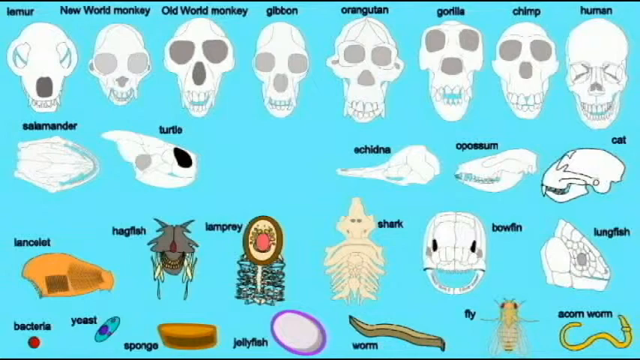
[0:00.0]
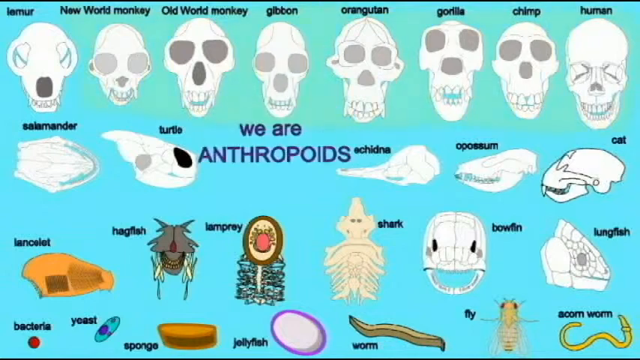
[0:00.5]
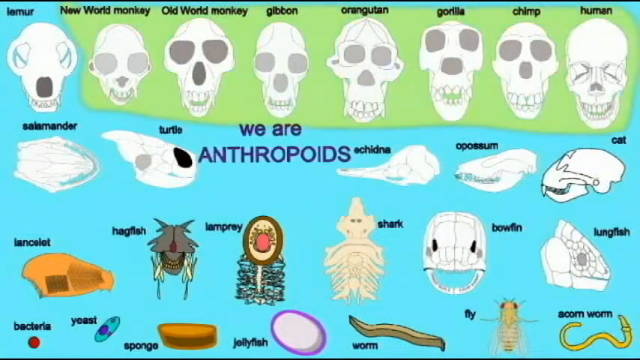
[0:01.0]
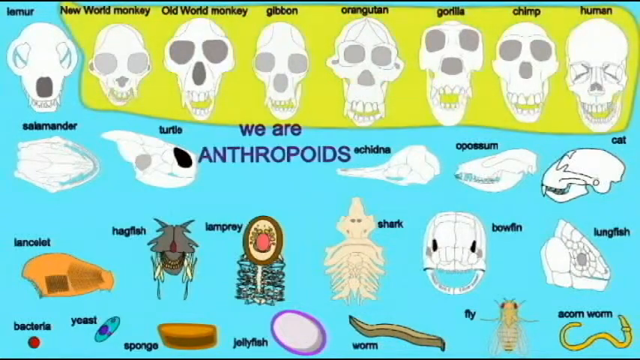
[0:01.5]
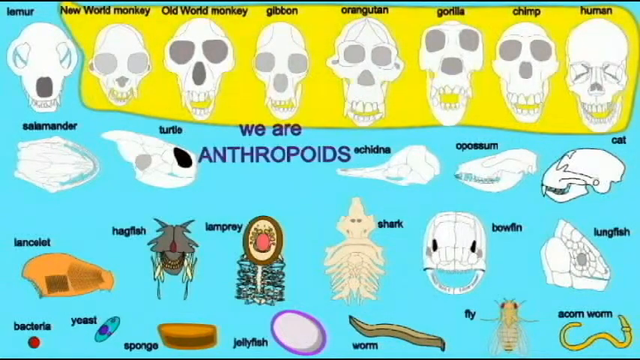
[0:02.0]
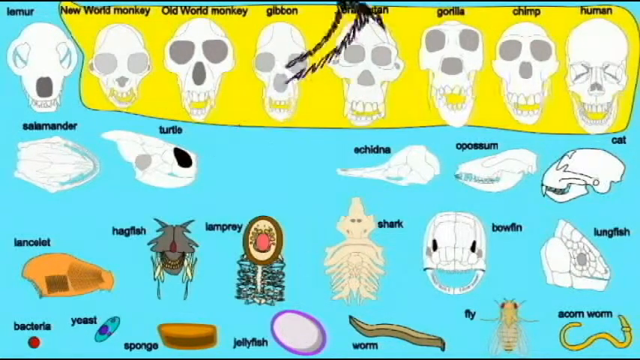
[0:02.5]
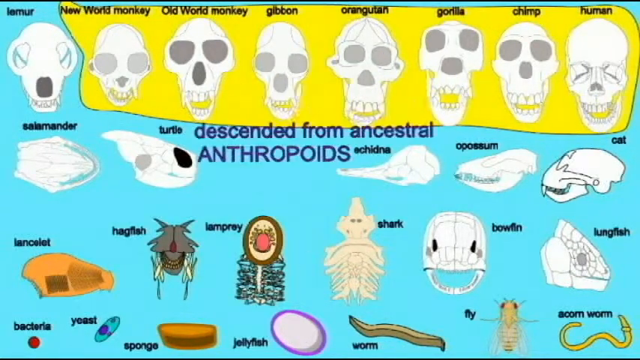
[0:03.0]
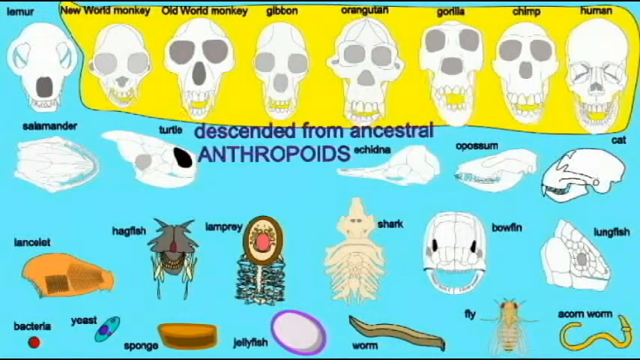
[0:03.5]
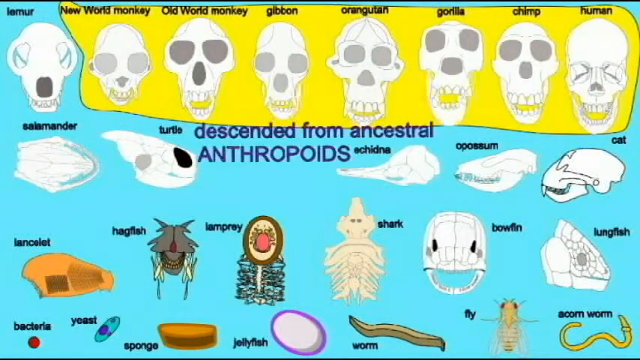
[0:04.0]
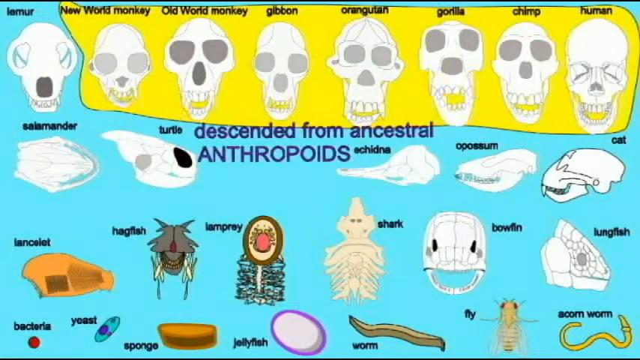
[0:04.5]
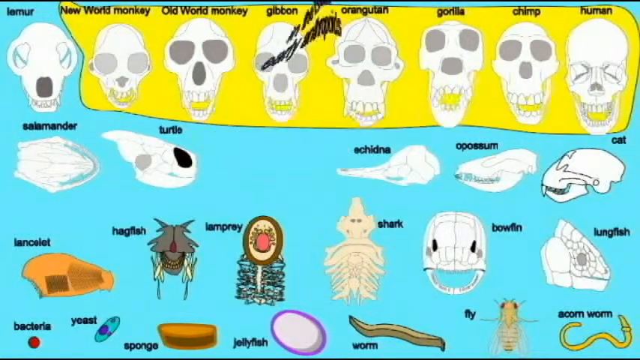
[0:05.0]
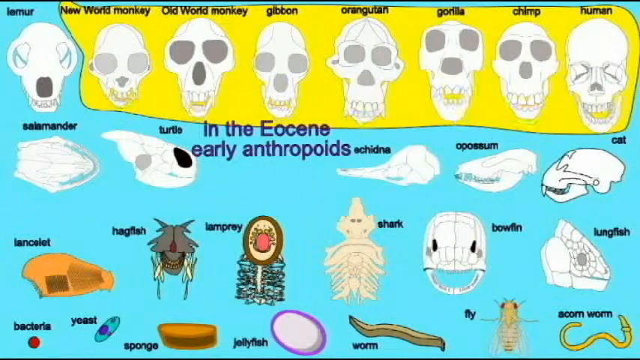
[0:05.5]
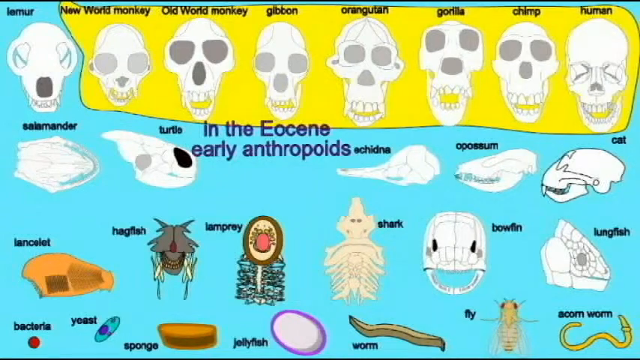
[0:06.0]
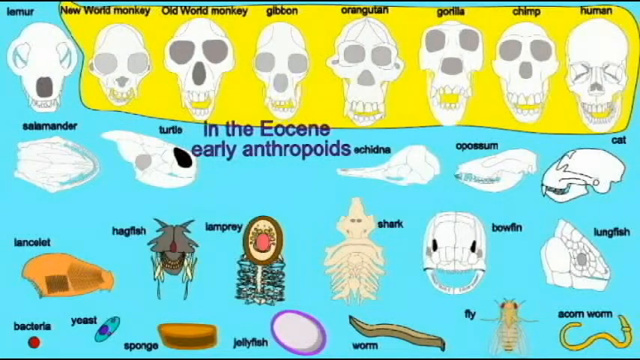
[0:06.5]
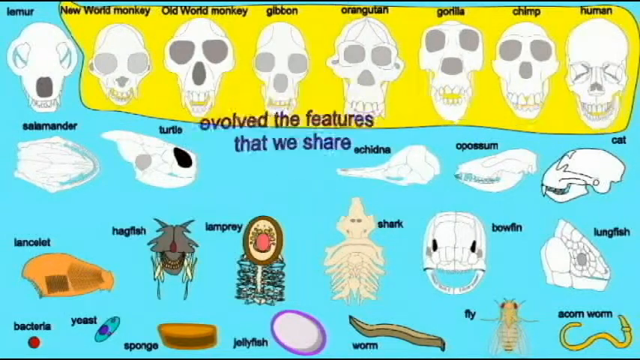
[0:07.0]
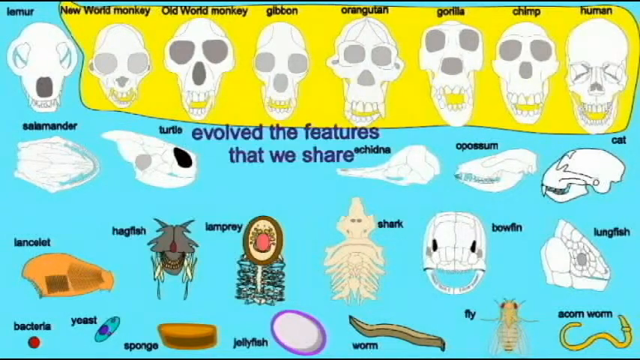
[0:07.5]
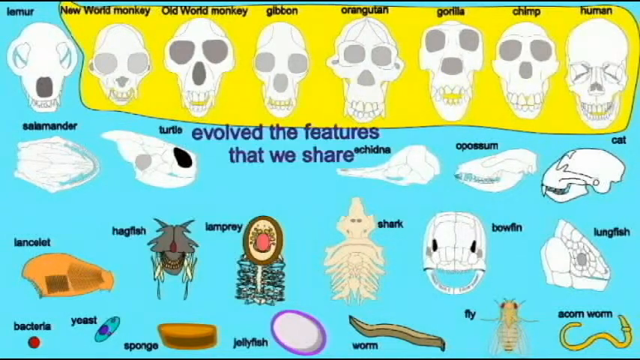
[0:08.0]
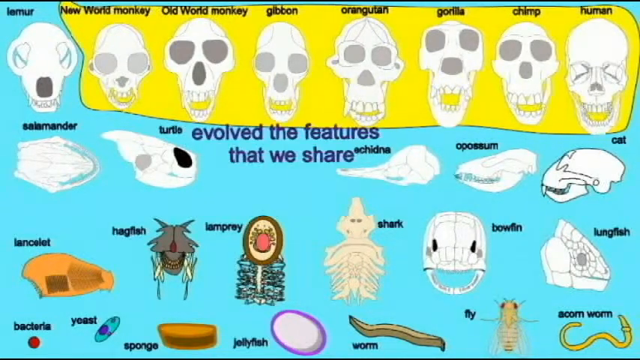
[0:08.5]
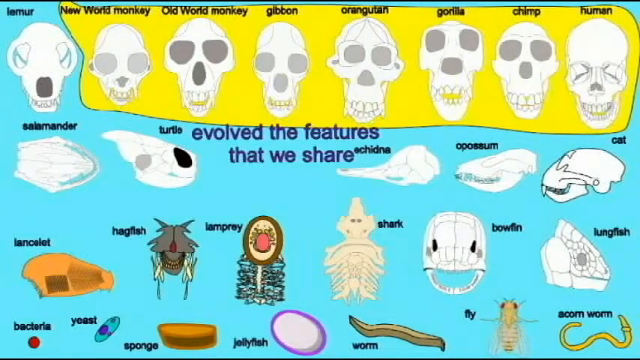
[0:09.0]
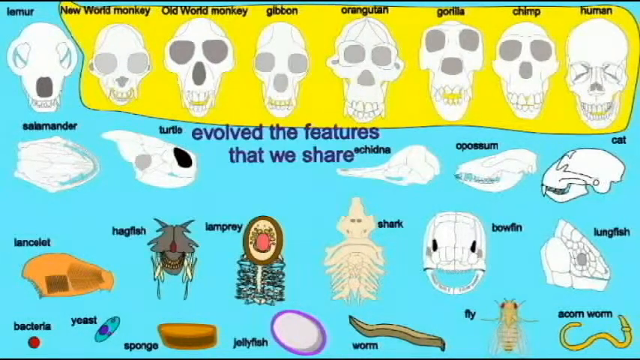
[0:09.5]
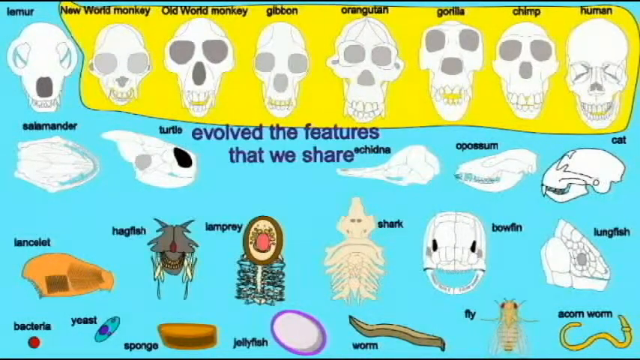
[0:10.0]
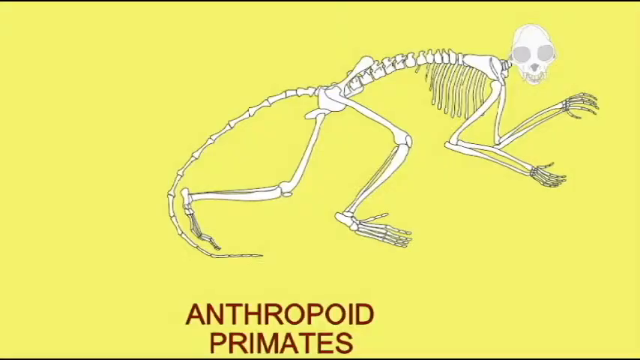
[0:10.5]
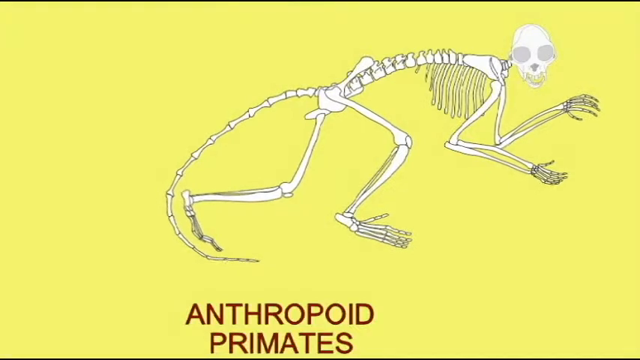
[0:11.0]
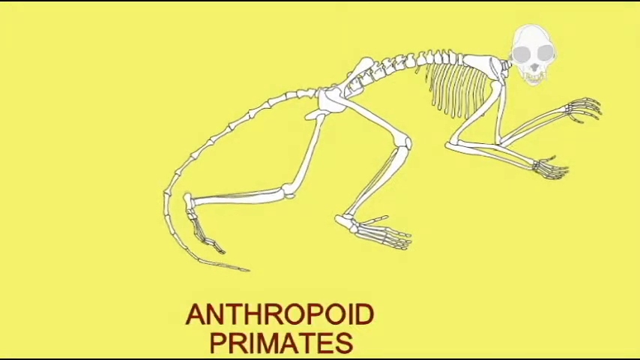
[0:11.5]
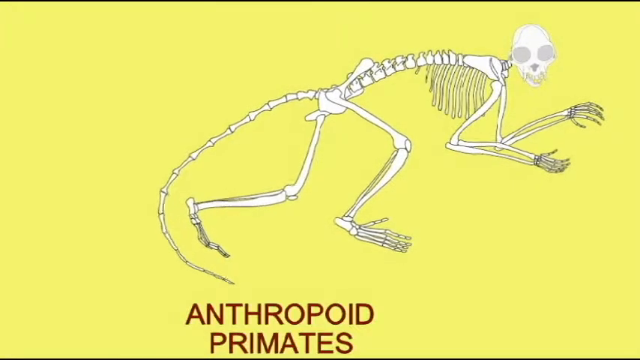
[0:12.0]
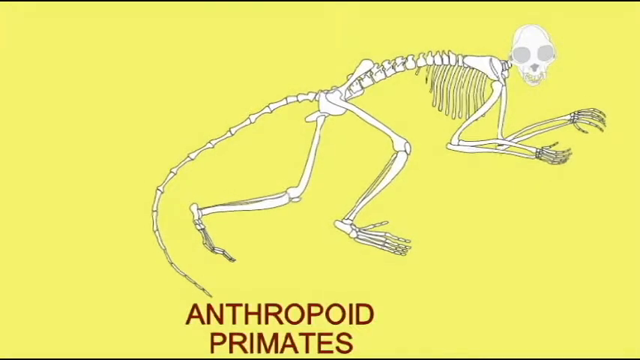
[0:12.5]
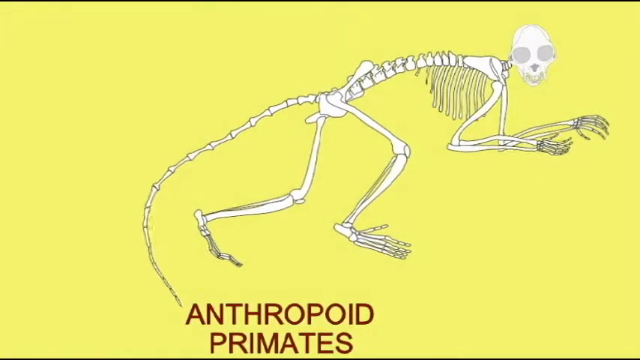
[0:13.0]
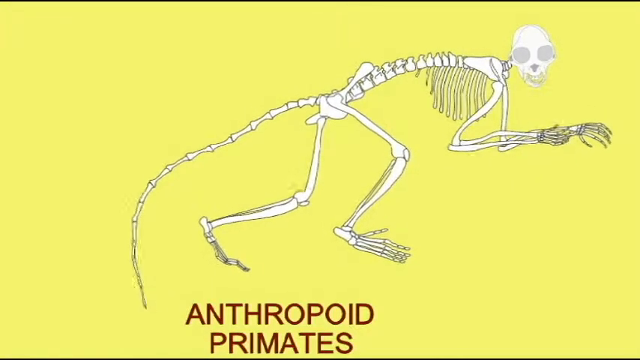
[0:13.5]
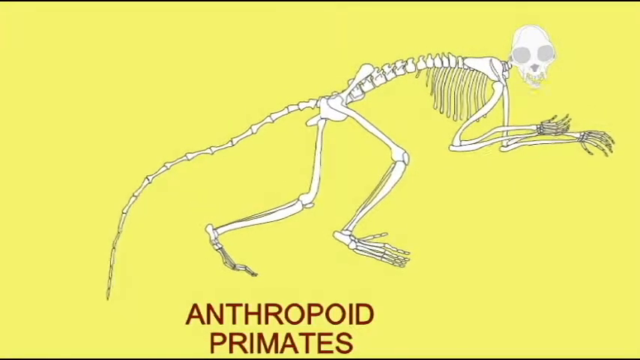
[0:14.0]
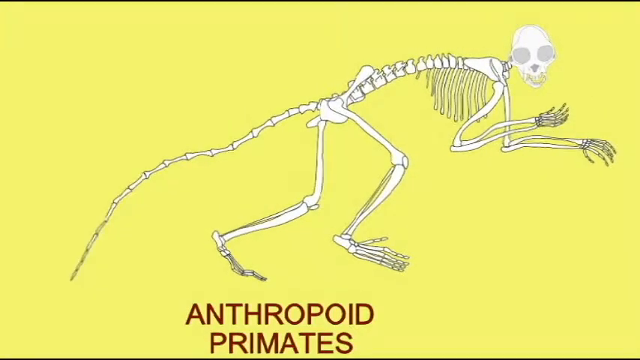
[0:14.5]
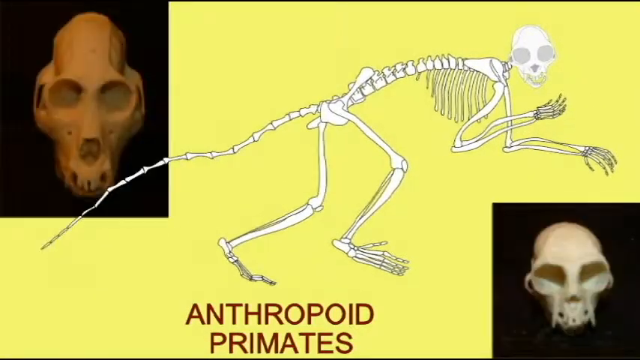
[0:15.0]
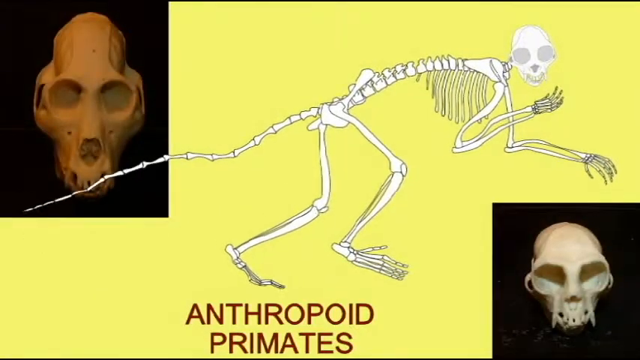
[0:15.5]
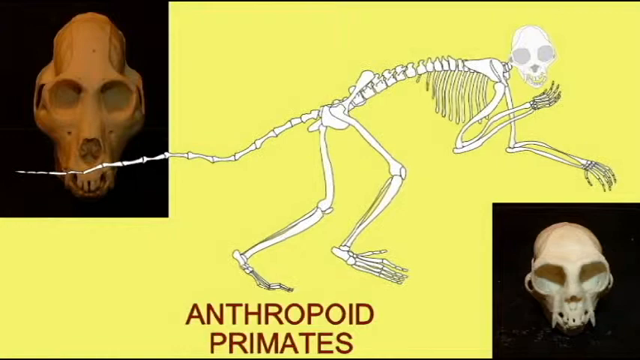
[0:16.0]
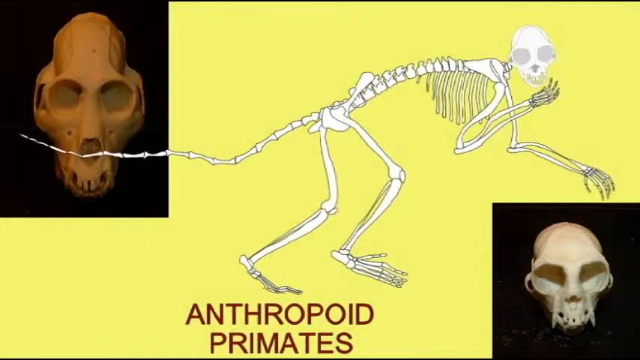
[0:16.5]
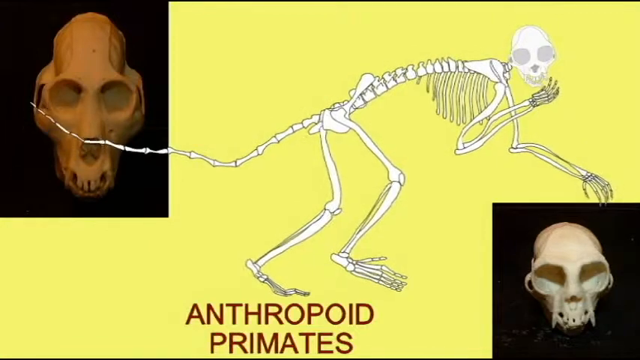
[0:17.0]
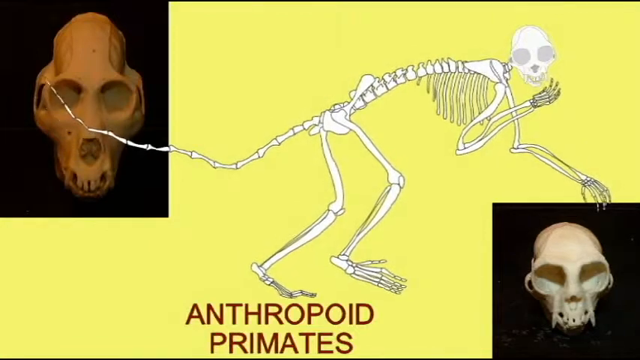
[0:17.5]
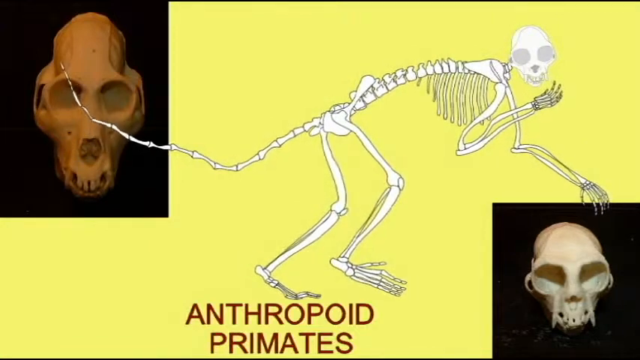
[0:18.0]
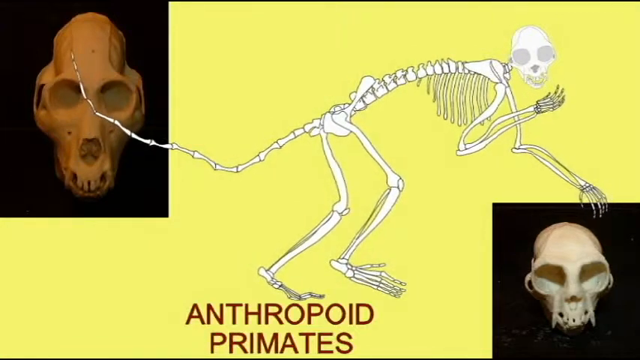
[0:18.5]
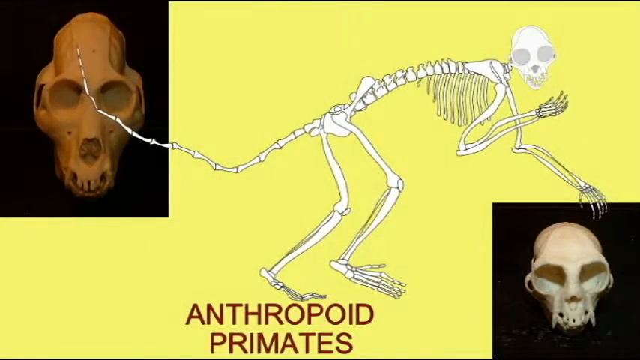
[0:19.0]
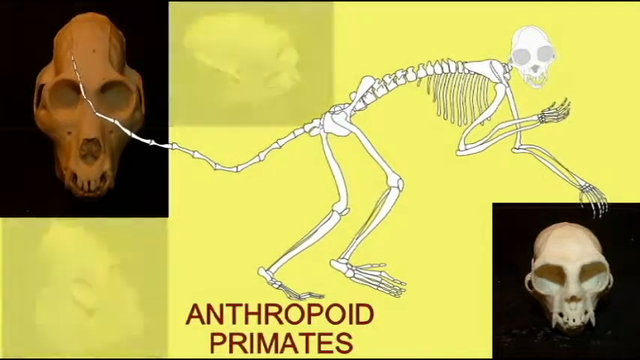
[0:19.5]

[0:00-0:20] A bright blue screen is covered with many different animal skulls scattered across it, filling the whole image with varying looks, and more human-looking skulls are near the top. Quickly, a yellow line is cast around some of the skulls. Text appears reading "we are anthropods, descendants from ancestral anthropods." The skulls begin to move and rattle their lower jaws. The video then cuts to a yellow background with the word "anthropod" at the bottom and a full skeleton of an animal with a tail in the middle, which moves up and down. Two animal skulls then appear on either end of the picture, both with black backgrounds, and finally two more skulls appear on the left-hand side of the screen. The animal figure keeps moving.